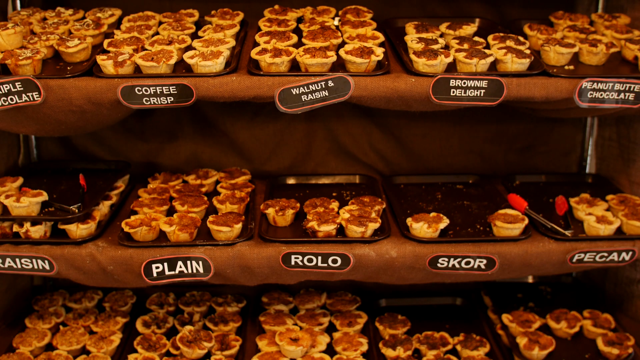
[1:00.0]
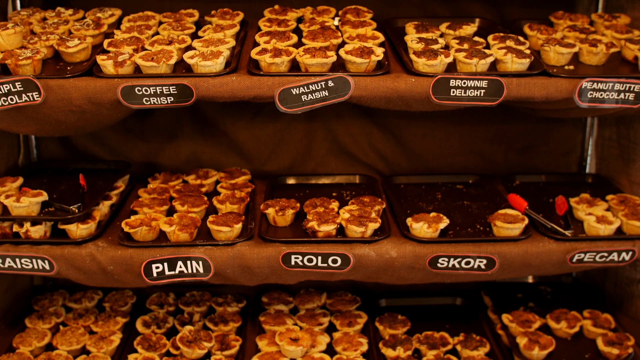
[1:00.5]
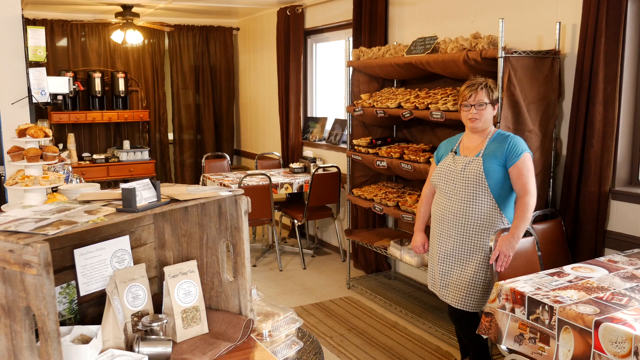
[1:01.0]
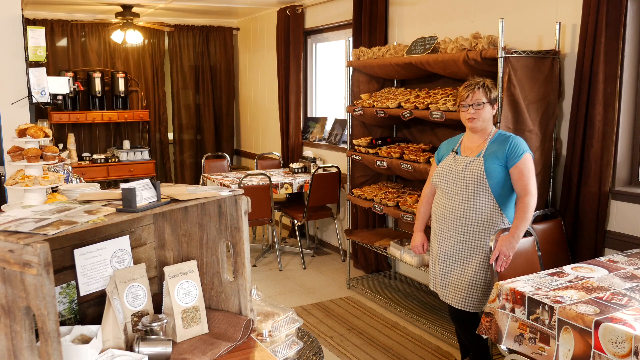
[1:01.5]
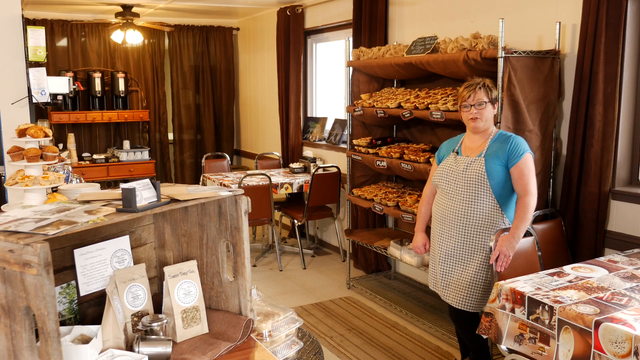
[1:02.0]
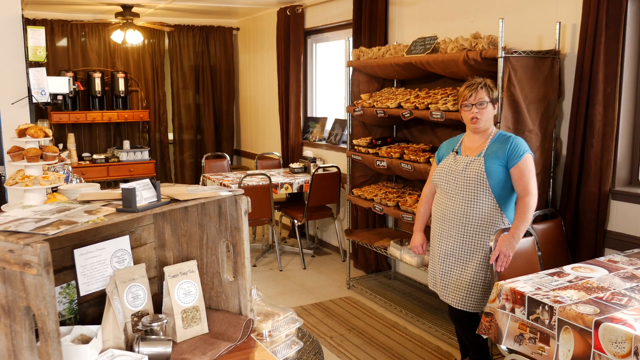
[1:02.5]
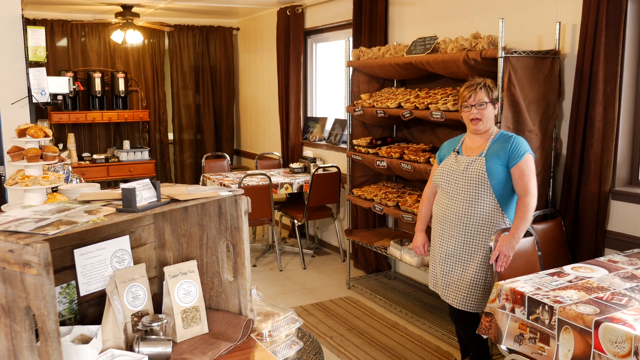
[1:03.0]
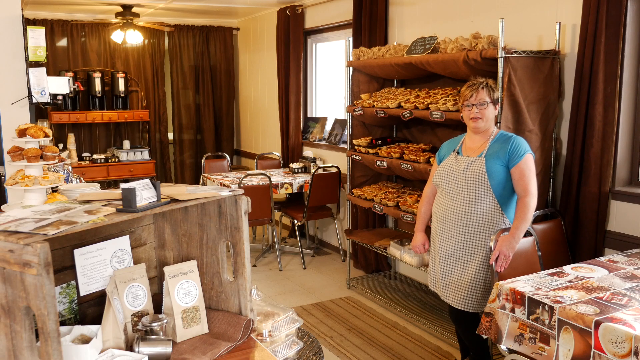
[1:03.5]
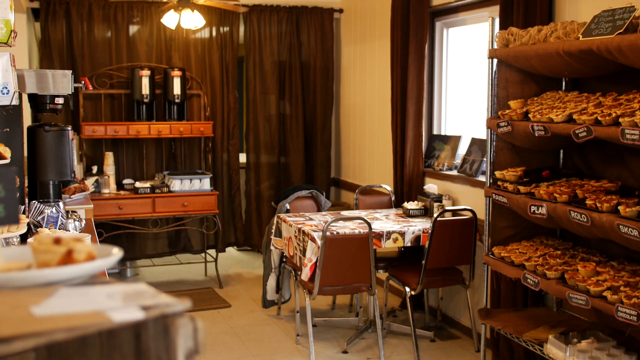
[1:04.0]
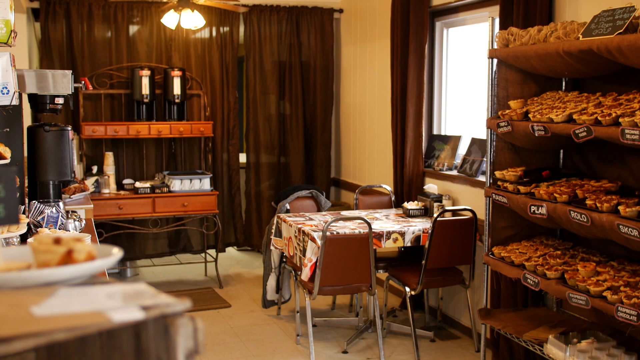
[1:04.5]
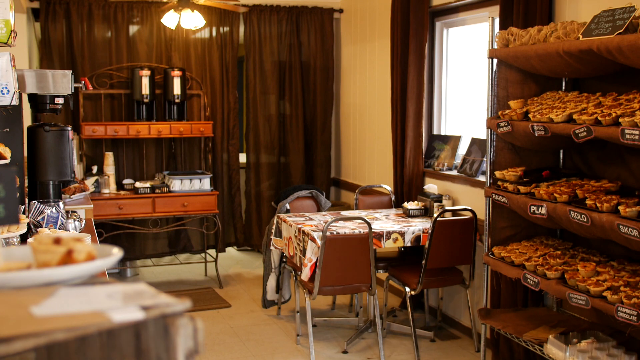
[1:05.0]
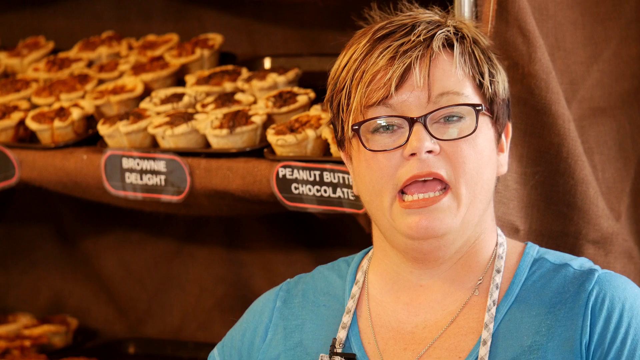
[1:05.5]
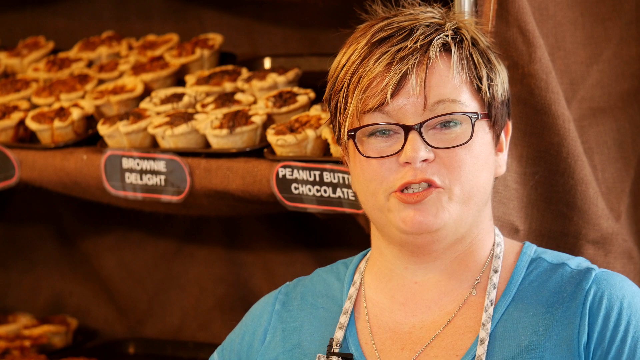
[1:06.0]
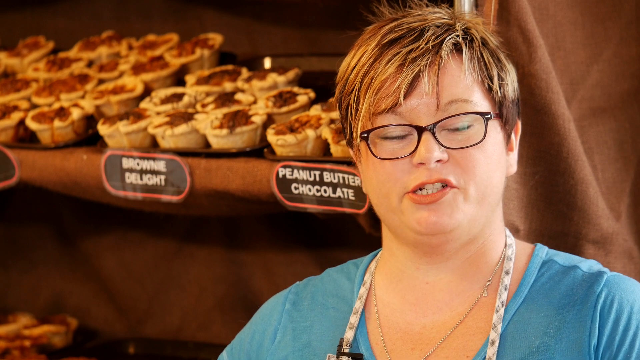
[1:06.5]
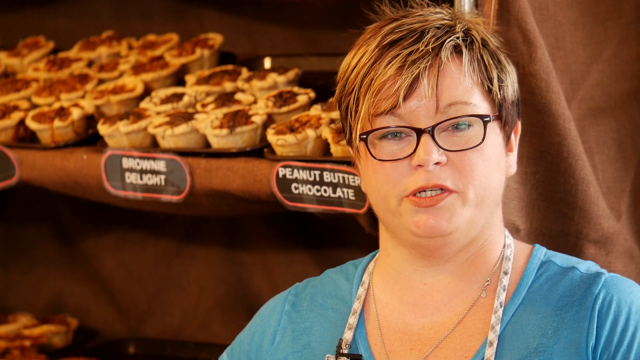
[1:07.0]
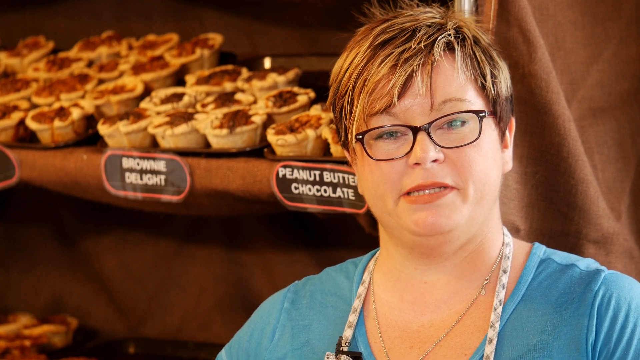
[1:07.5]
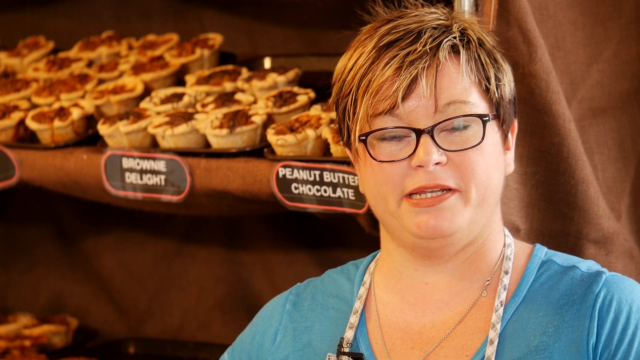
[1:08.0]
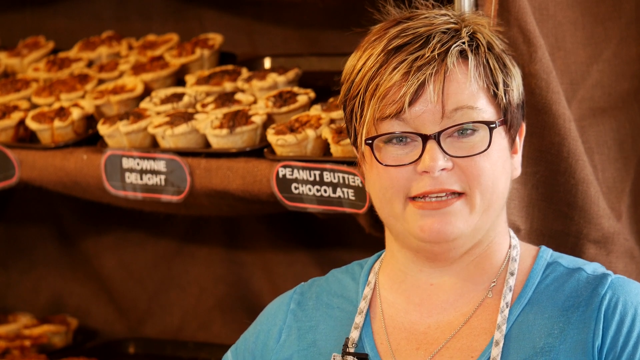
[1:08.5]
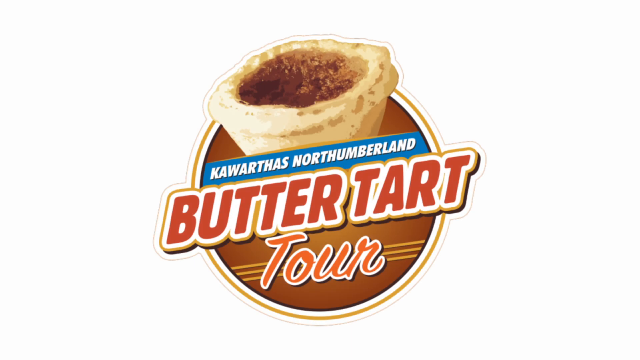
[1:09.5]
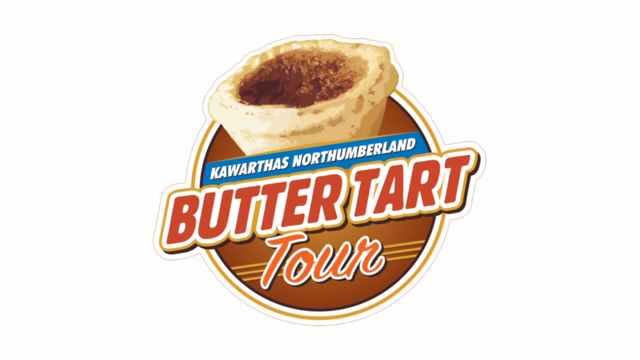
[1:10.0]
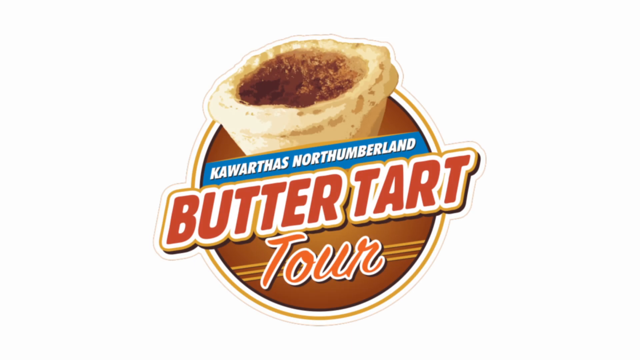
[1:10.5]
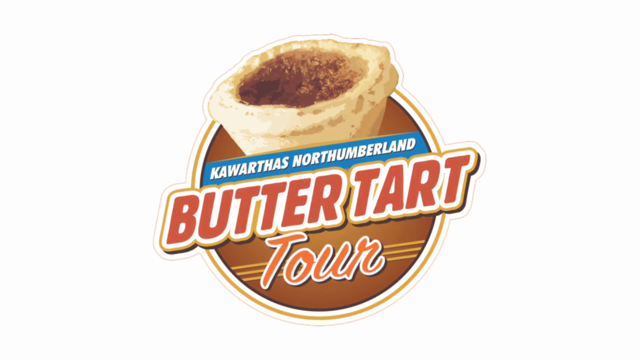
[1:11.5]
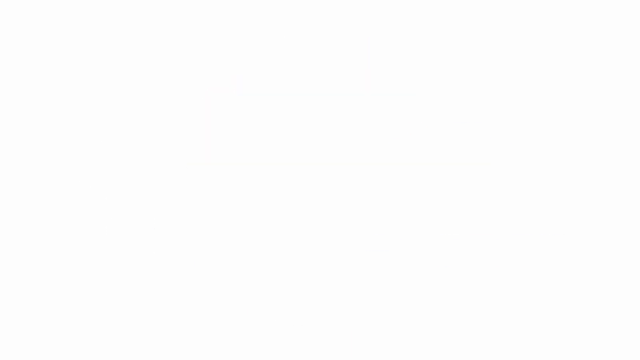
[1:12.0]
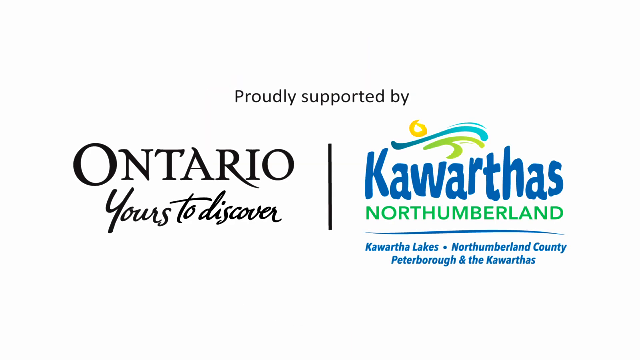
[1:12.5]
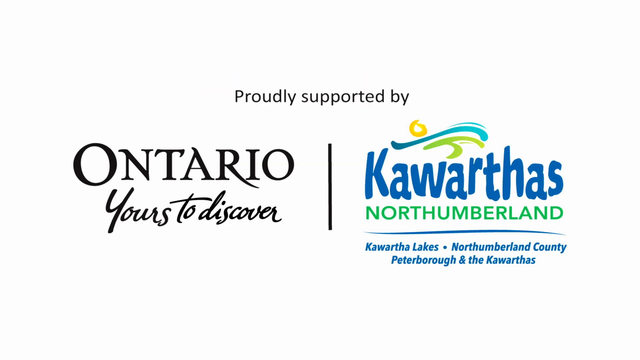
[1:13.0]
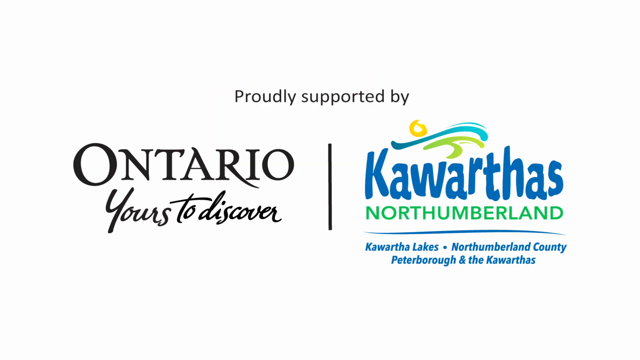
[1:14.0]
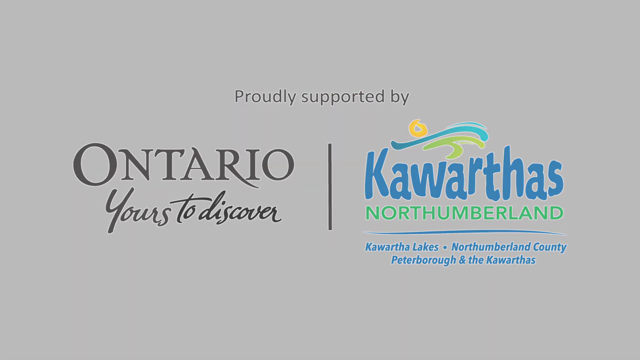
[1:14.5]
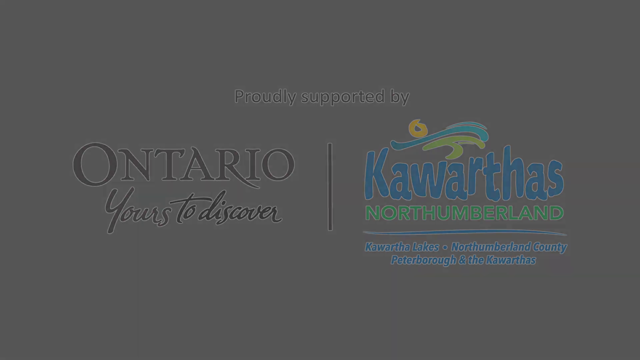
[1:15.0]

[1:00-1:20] Everything is organized, and different types of baked goods are available, including brownies, peanut butter, chocolate, coffee cup and apricot chocolate. The items are not picked up by hand. The surroundings are clean, with different kinds of furnishings, and the place looks something like a coffee shop.